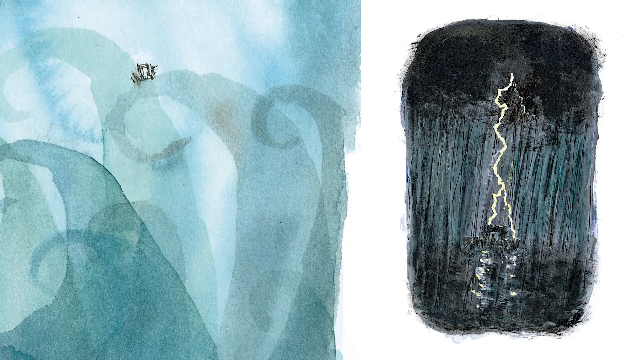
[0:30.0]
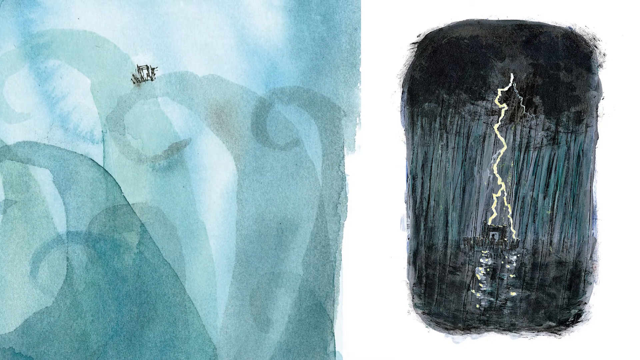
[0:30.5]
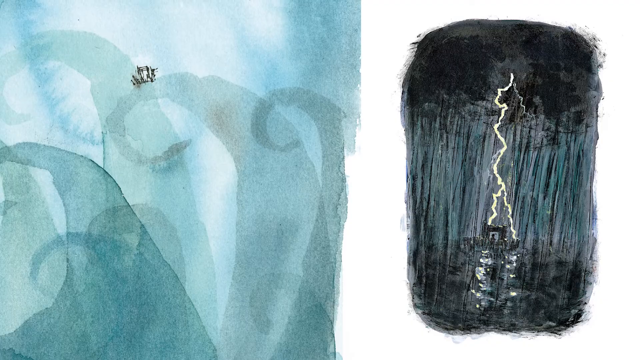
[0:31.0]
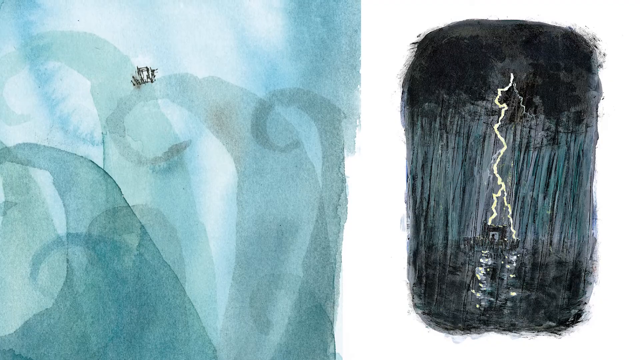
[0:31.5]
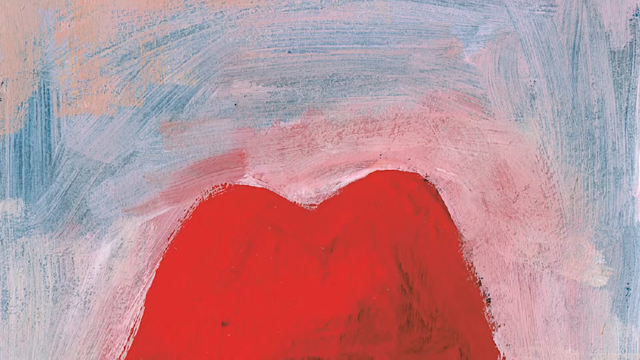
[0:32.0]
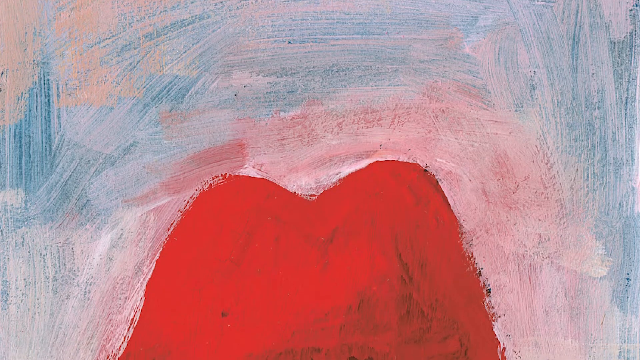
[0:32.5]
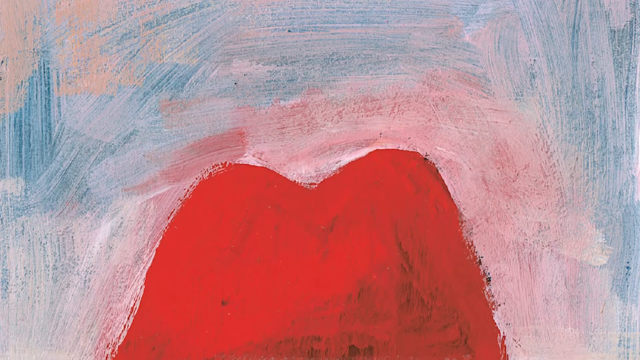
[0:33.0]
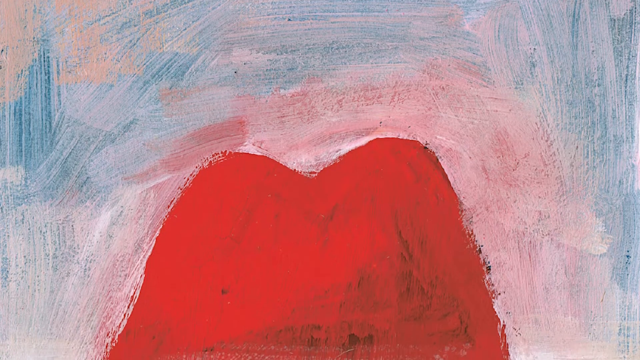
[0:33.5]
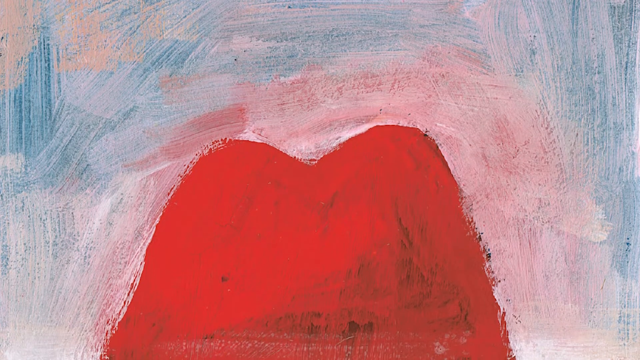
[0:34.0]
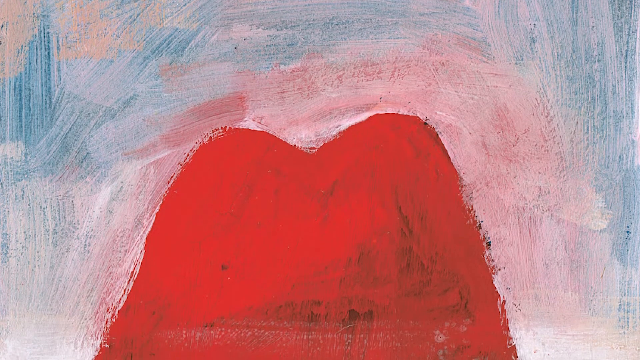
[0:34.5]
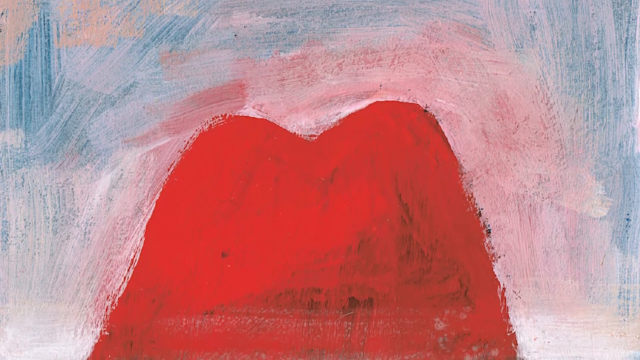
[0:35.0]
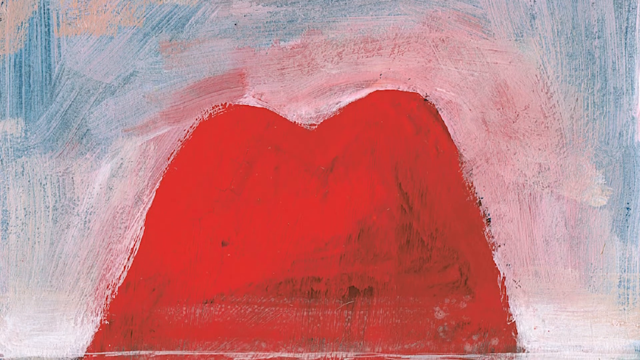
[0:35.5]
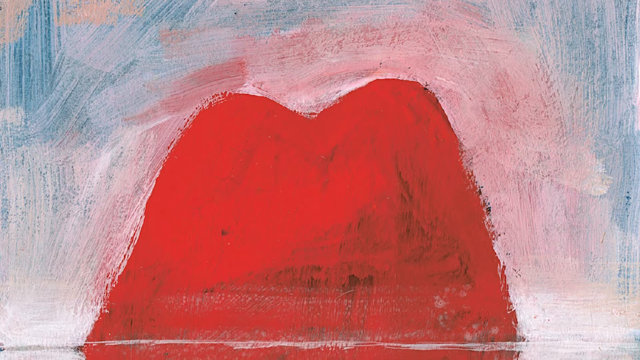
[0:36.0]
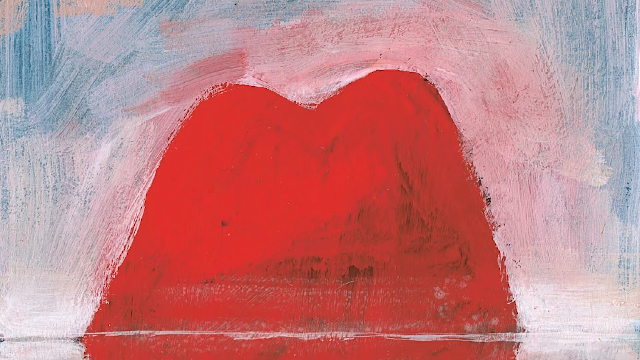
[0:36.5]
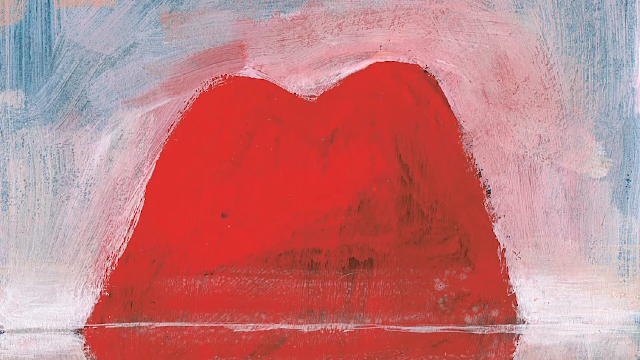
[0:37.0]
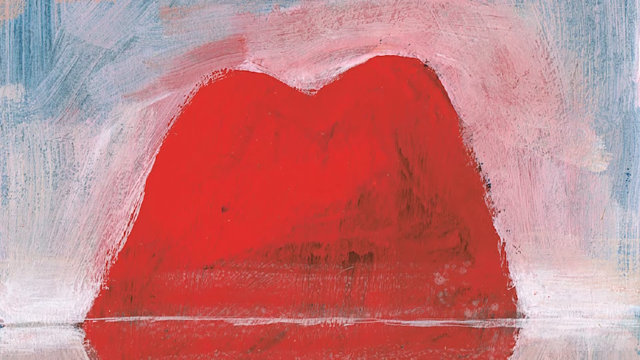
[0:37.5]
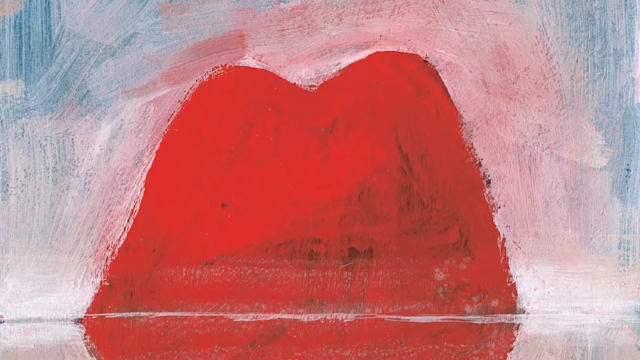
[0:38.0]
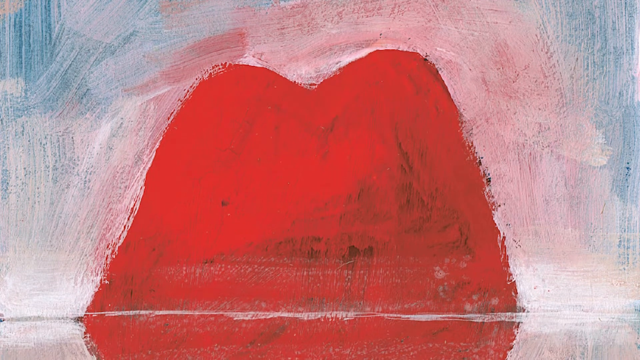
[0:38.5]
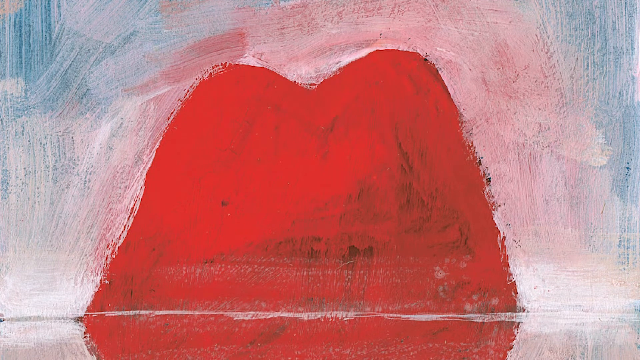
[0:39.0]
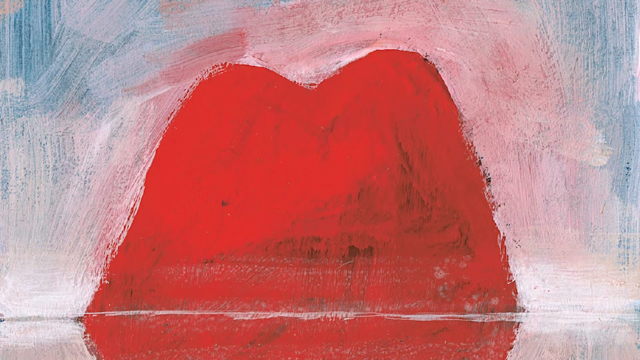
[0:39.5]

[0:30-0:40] The next picture shows a large red shape resembling the bottom half of a bell pepper, surrounded by somewhat chaotic paint strokes of light red and blue. The following picture shows a group of sailors on a boat, drawn somewhat crudely, possibly in pastel oil paints. On the top deck the sailors point to the left, on the deck below they point to the right, and on the deck below that they point left again. Some of the sailors are outlined in blue, others in orange.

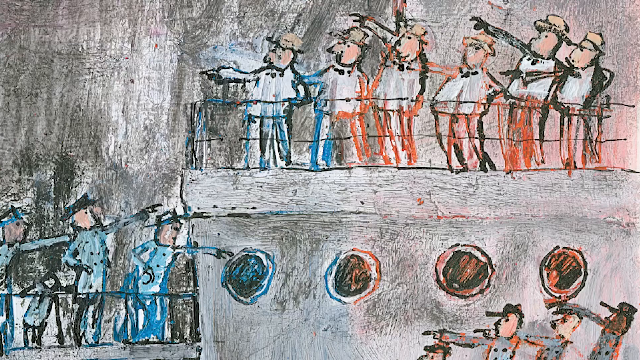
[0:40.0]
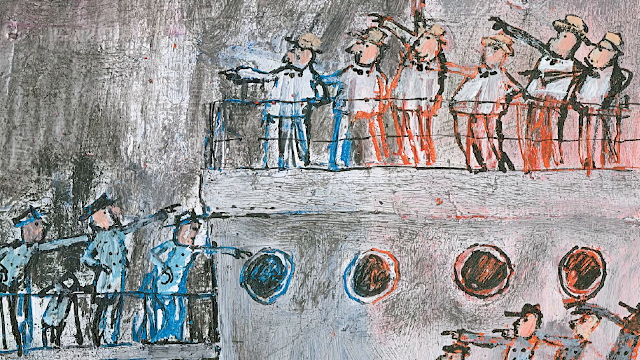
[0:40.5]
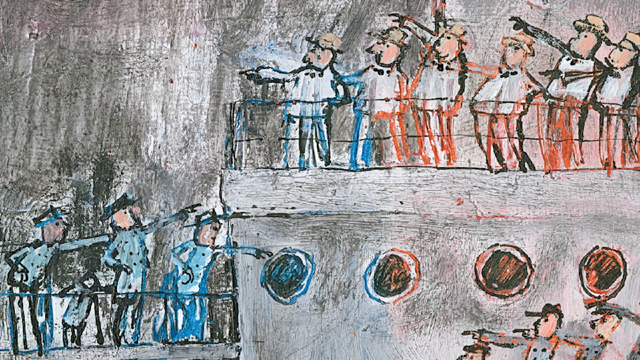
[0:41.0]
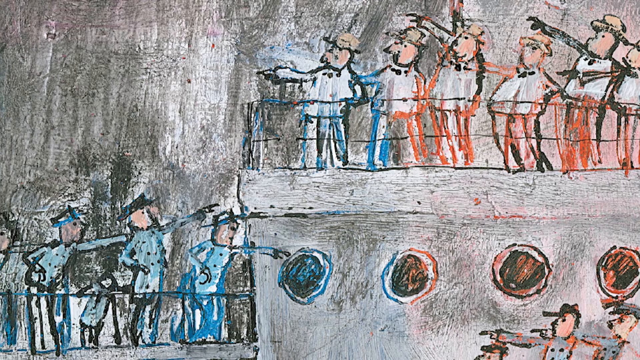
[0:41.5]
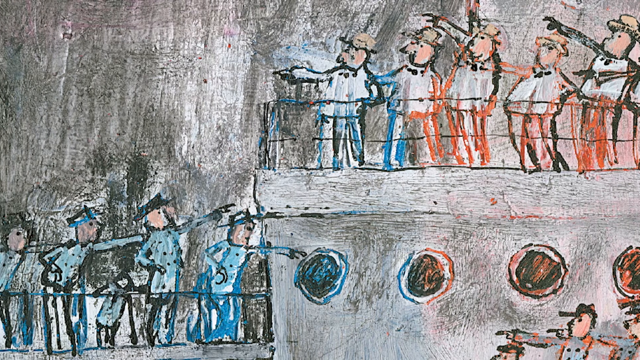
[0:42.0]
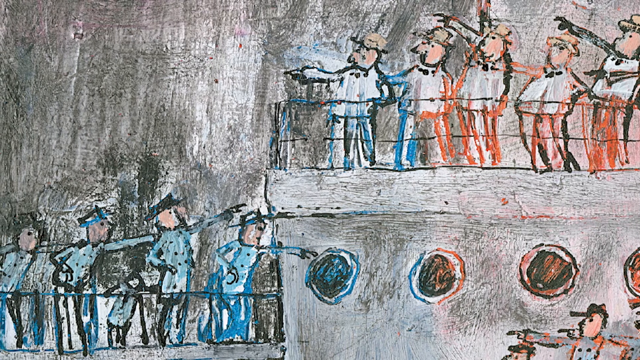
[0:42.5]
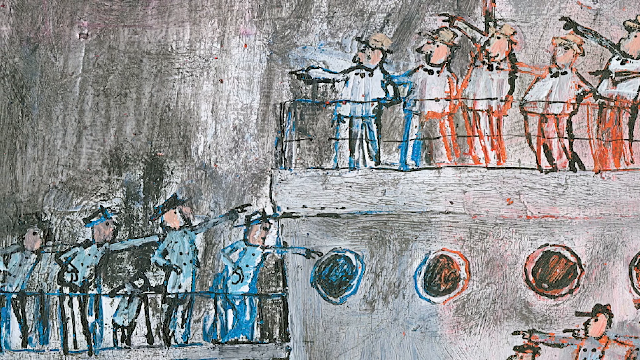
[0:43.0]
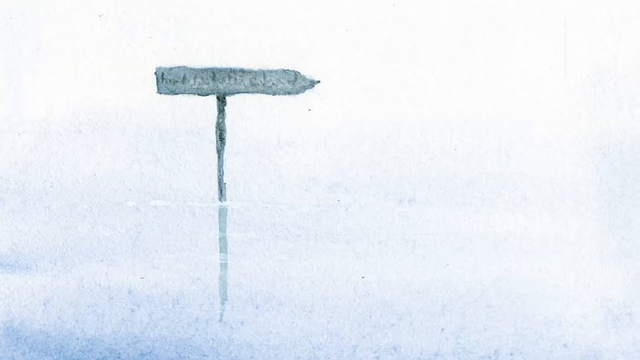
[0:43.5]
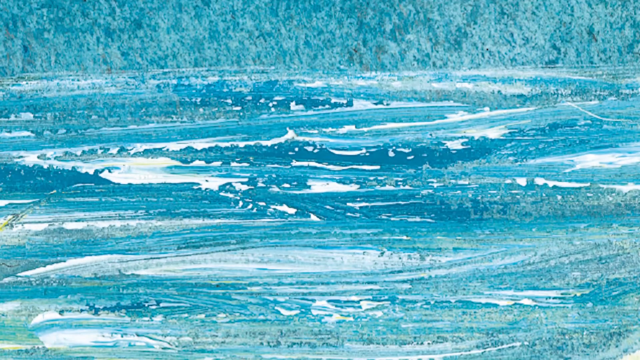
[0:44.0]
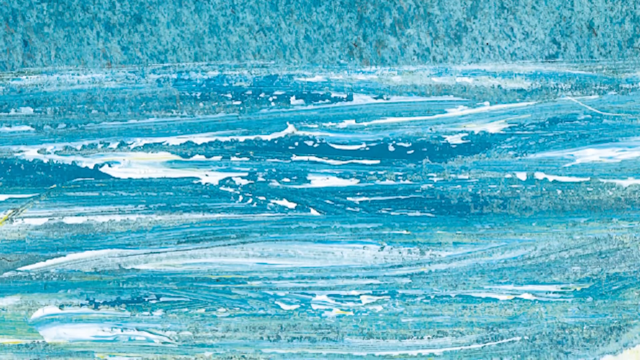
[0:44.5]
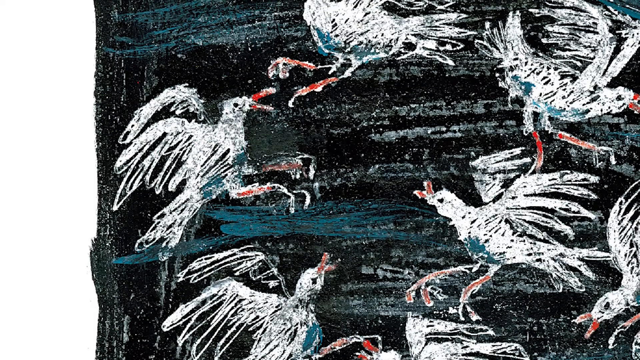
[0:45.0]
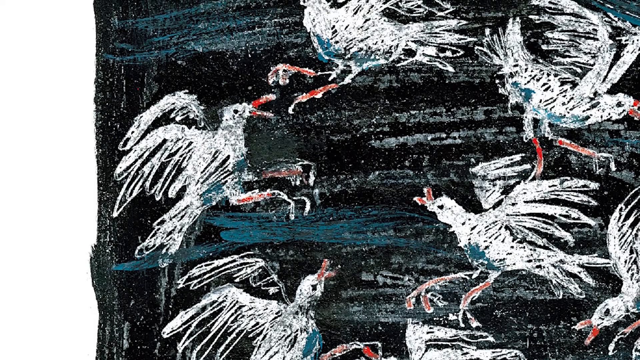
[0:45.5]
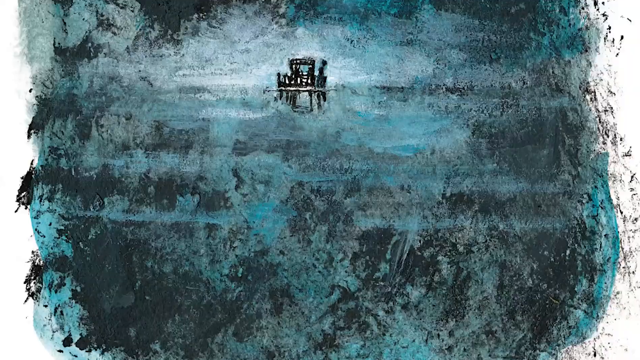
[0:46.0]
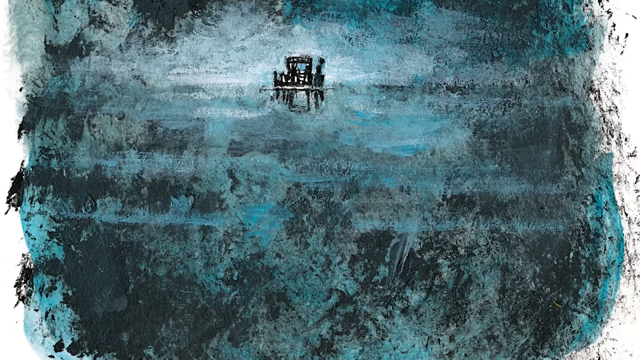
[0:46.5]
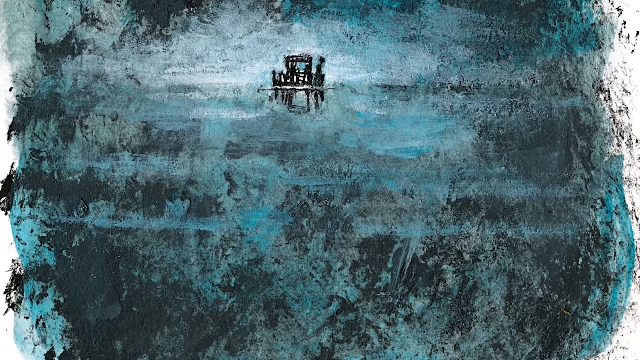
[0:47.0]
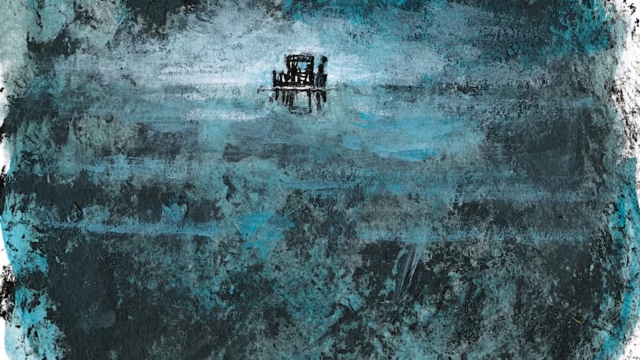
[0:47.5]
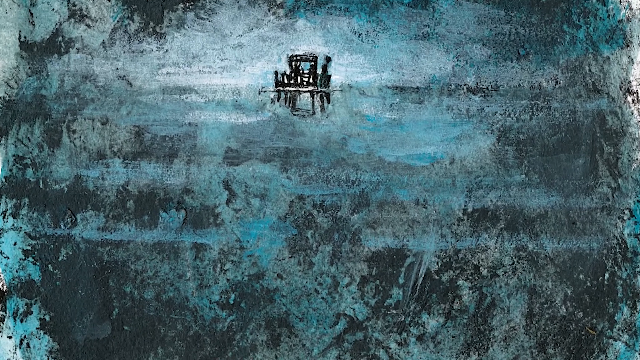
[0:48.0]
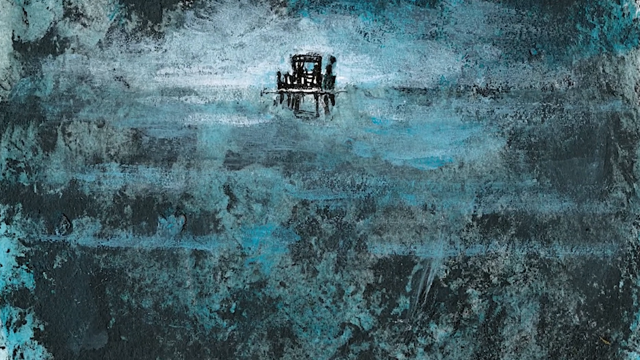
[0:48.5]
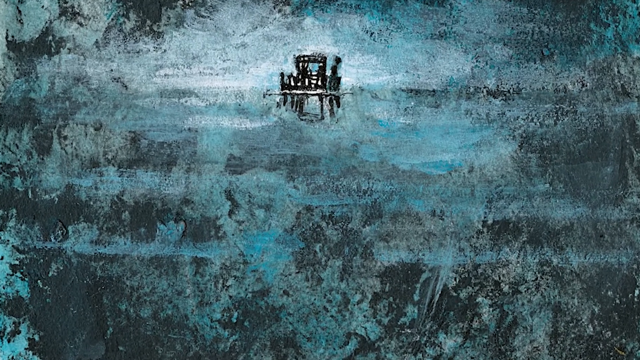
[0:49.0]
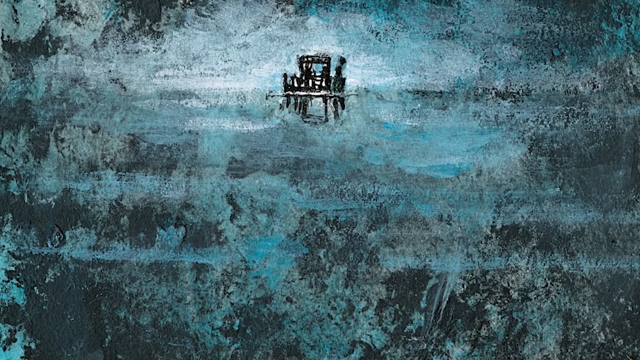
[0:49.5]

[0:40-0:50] The camera pans across the scene of the sailors pointing in different directions. Next comes an image that could be water, looking somewhat chaotic with many lines of blue and white. After that, a scene with a background coloured black and blue shows white roosters fighting each other; there appear to be five or six of them. Another picture follows, also coloured very darkly with black and blue that seem to fade in and out of each other, and in the center is what looks like a tractor or a carriage or cart of some kind, drawn in black.